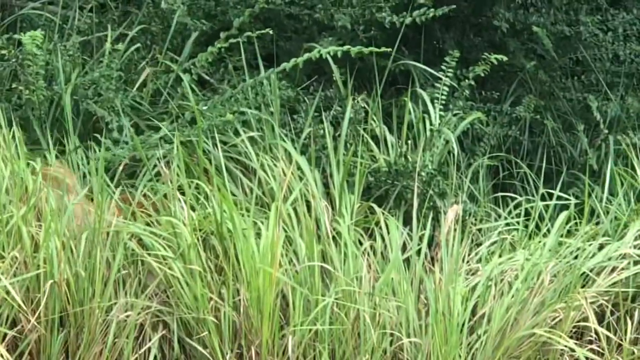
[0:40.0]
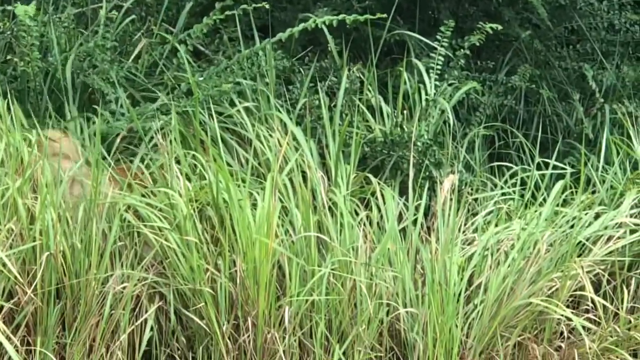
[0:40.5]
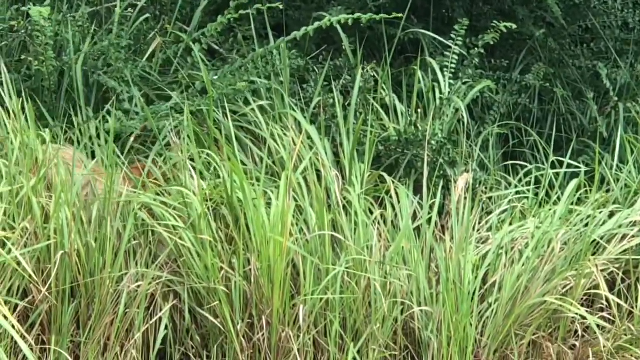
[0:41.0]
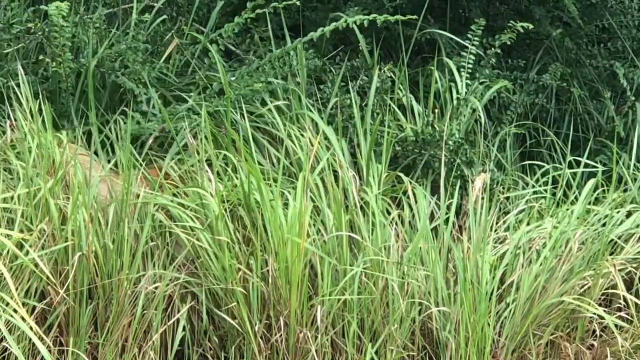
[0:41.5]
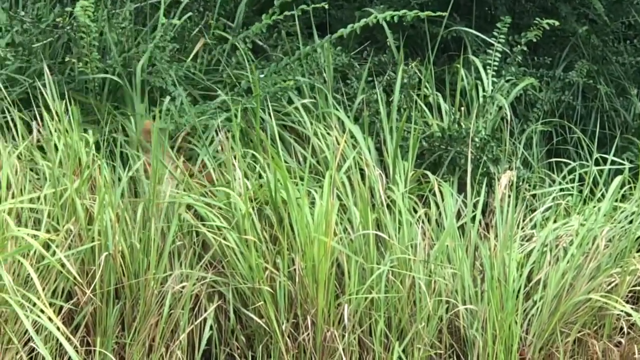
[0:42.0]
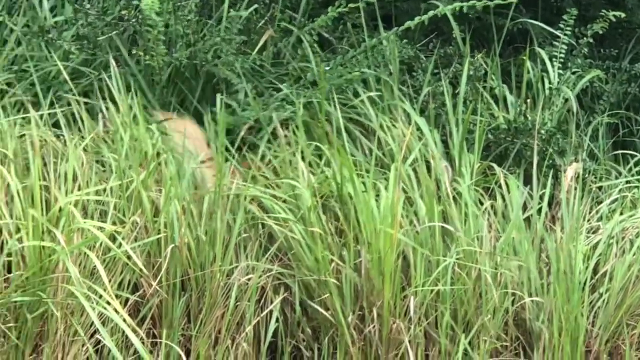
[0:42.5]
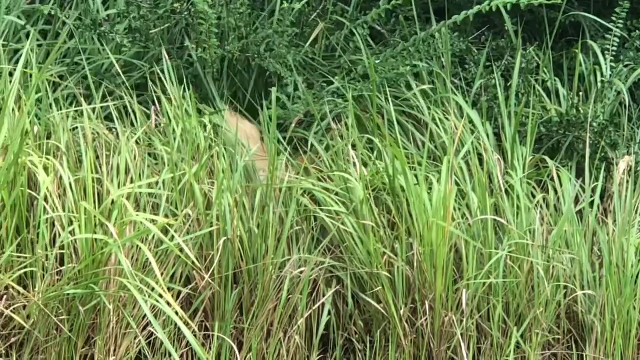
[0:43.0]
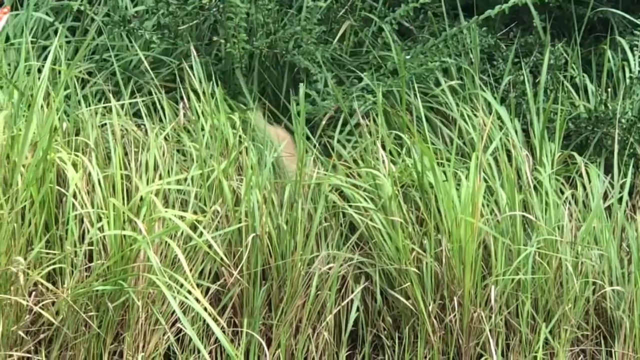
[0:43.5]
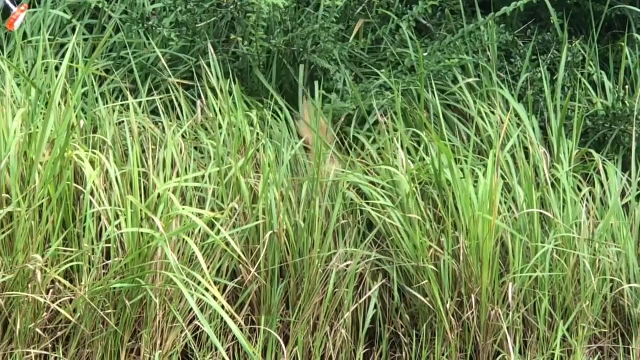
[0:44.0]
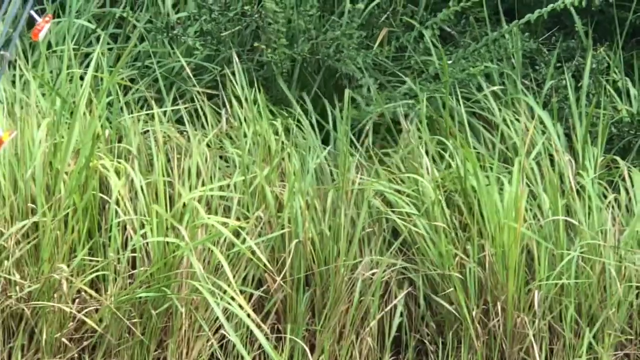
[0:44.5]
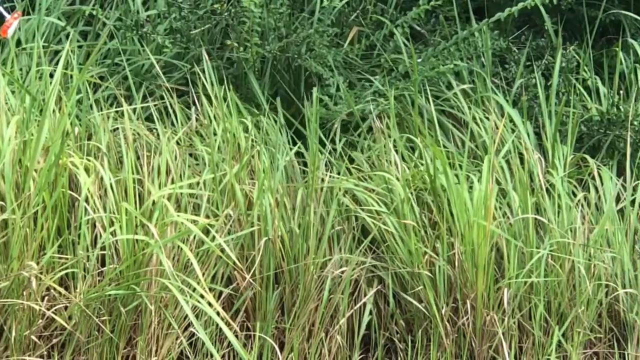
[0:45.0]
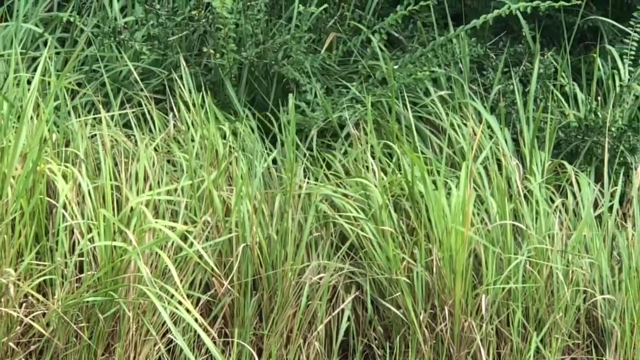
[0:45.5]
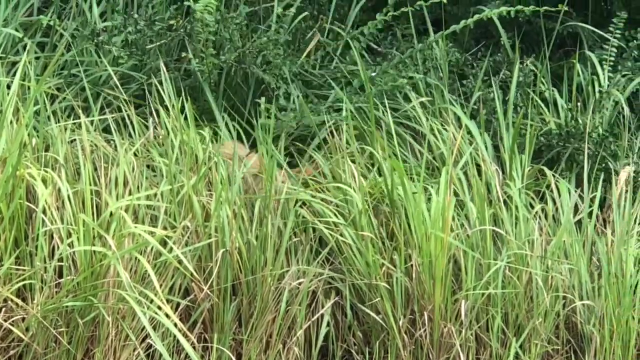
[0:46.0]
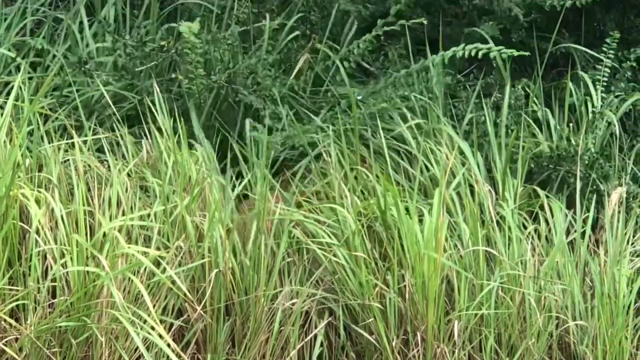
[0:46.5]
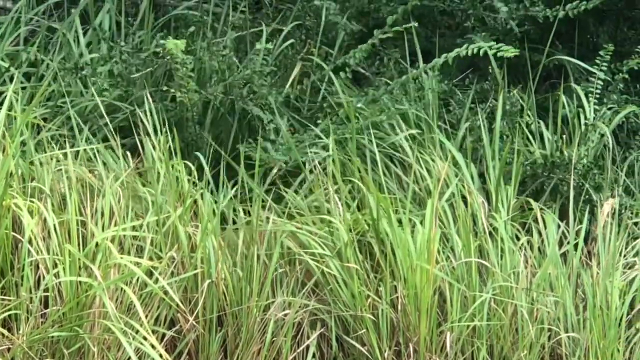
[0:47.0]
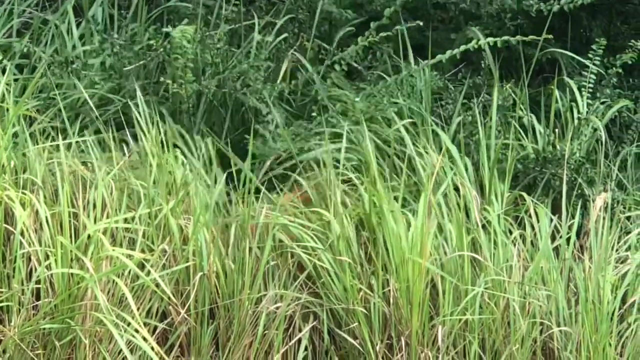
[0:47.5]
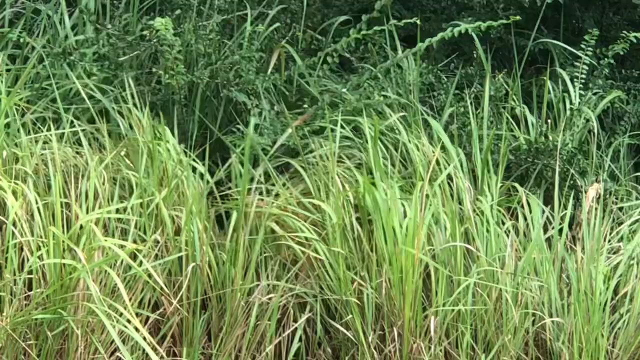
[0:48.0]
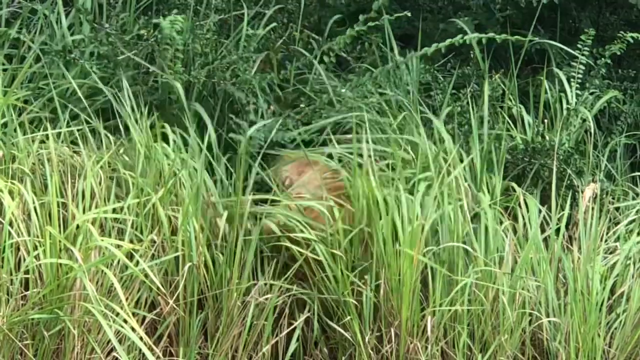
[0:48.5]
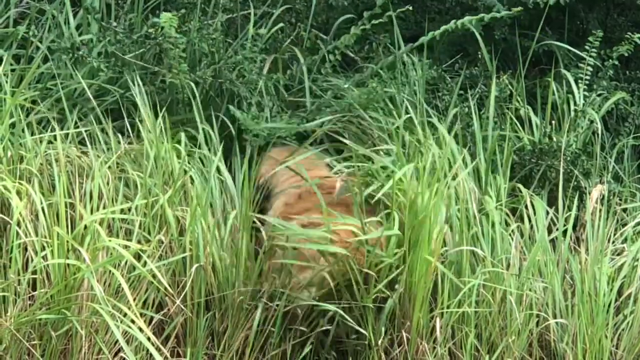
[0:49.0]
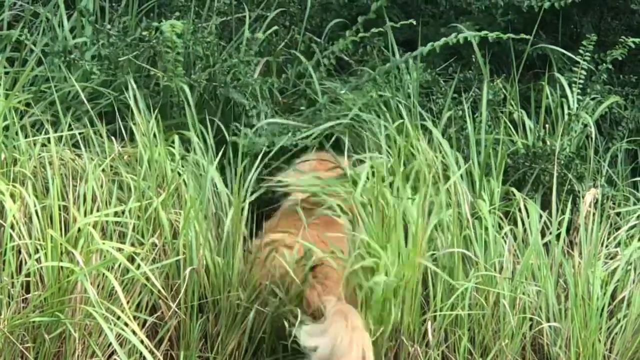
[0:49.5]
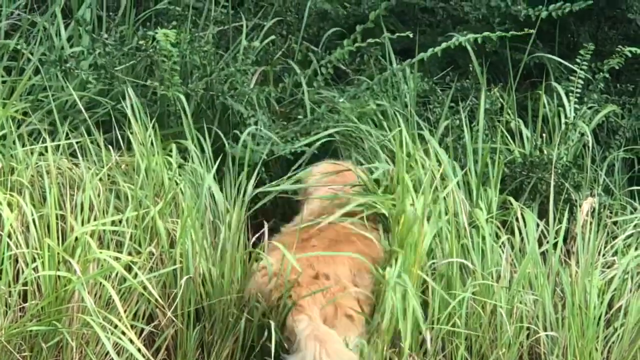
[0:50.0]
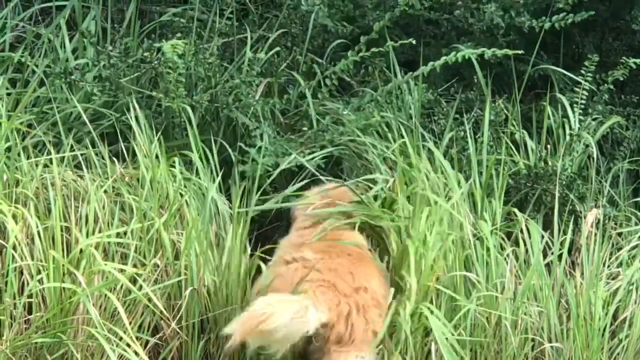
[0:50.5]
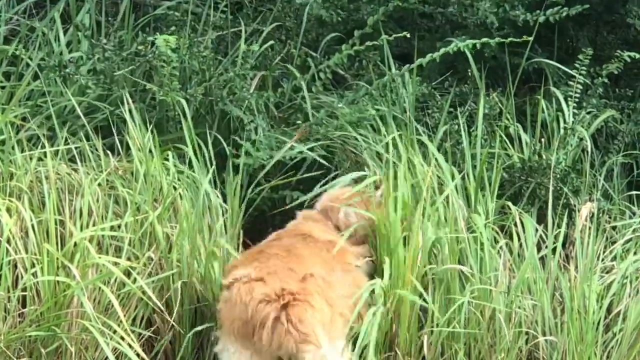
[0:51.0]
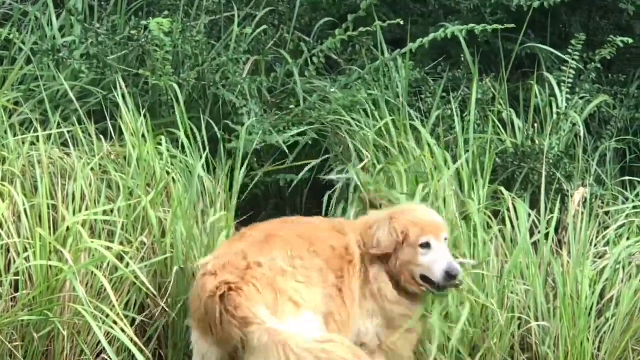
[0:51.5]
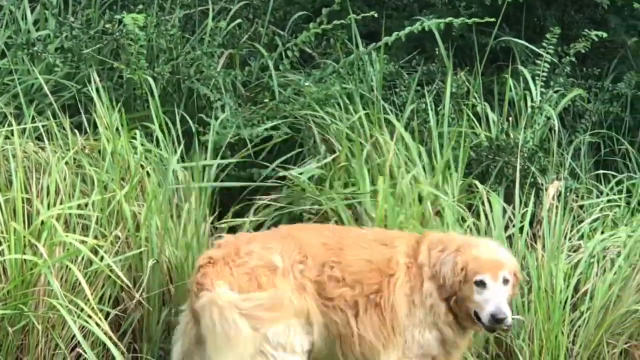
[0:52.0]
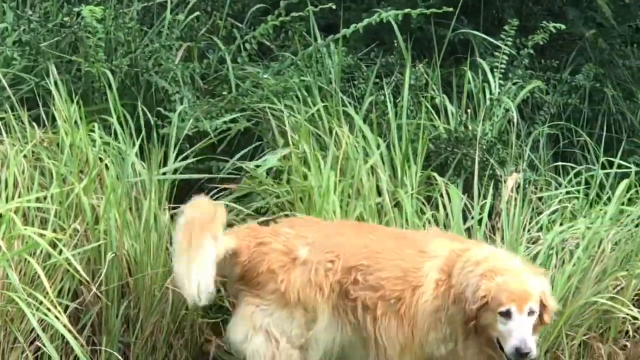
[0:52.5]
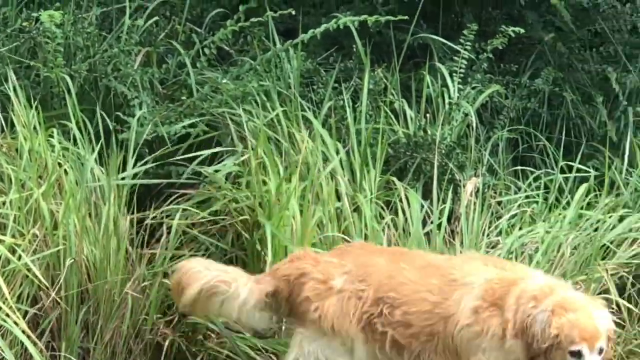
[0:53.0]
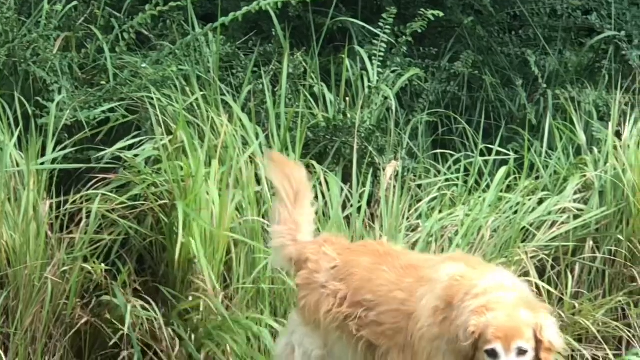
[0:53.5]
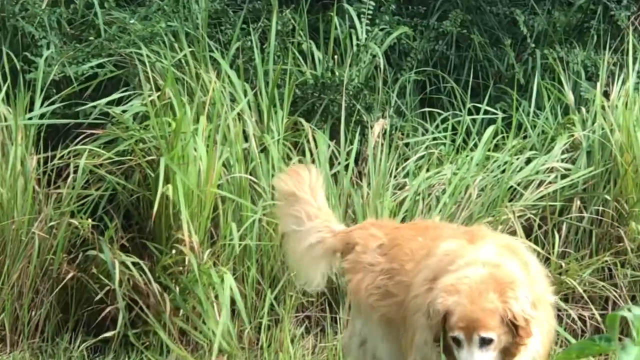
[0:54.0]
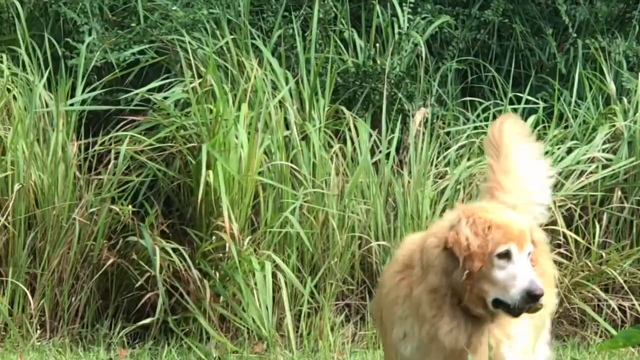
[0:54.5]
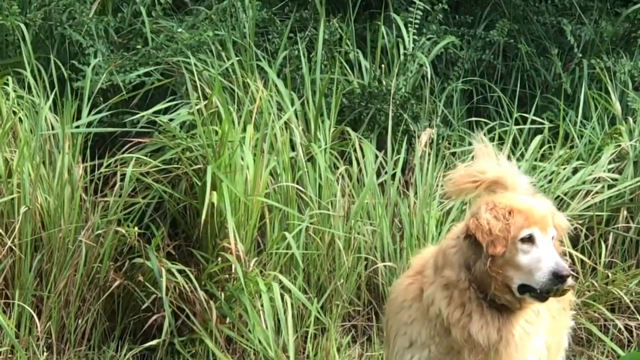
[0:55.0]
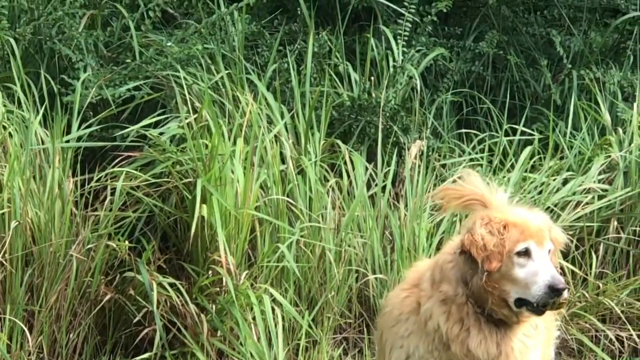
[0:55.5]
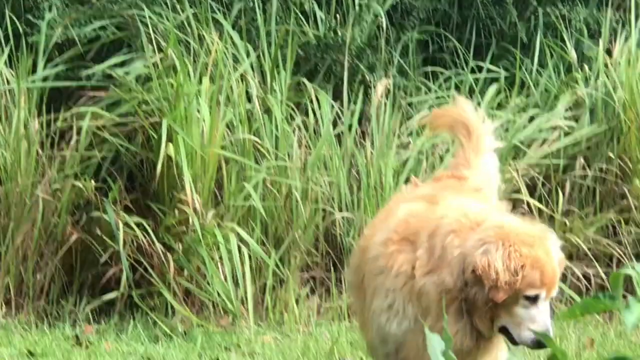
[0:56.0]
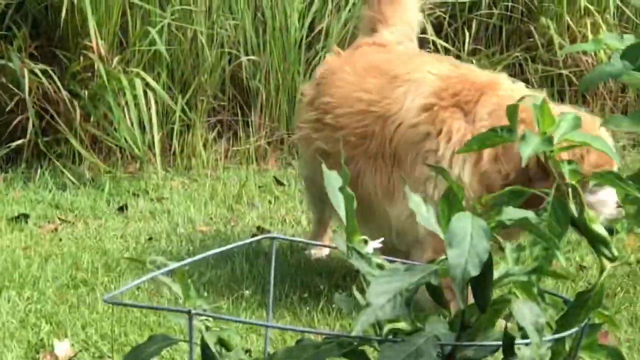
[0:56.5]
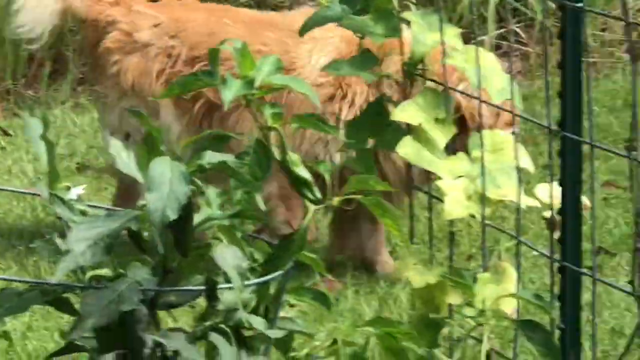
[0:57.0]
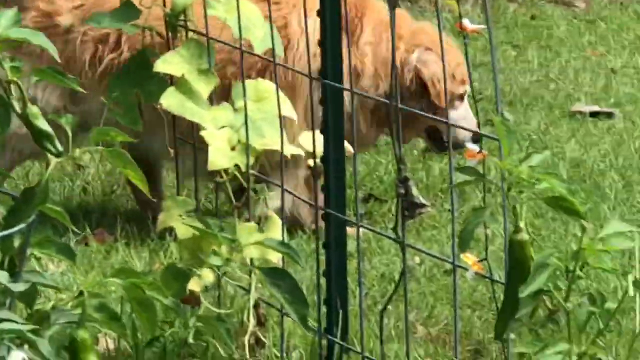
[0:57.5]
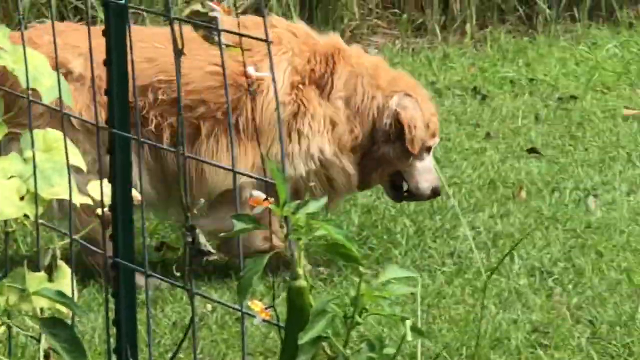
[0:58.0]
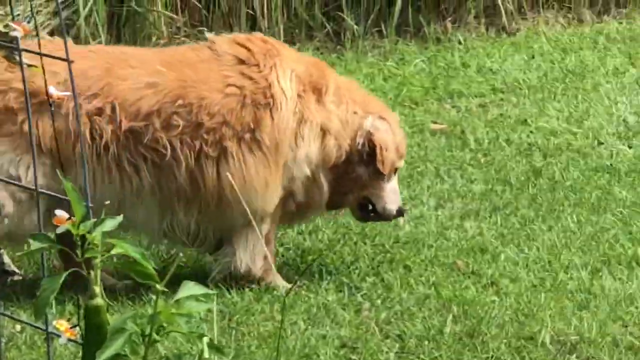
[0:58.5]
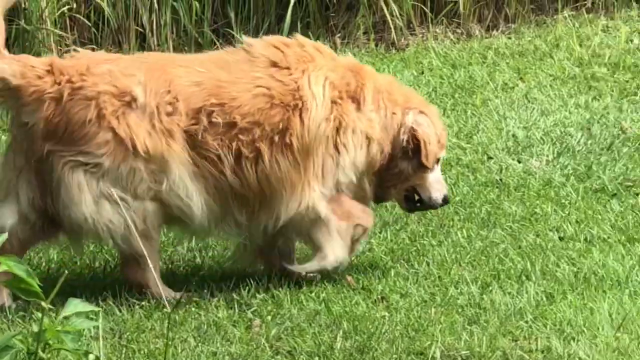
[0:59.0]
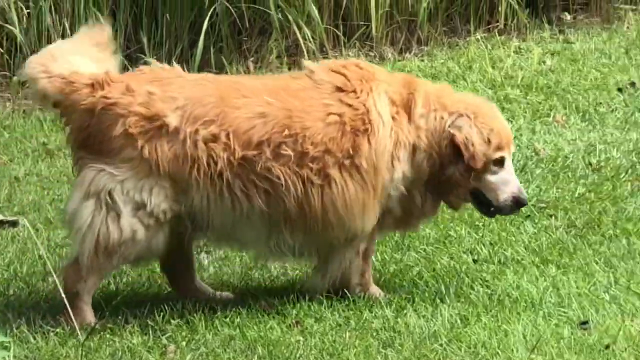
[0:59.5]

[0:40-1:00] The grass keeps moving because of the animal's tail behind it. After a moment, the animal is revealed to be a dog. It looks like a Golden Retriever, but may be another breed with fluffier, longer hair. The dog walks backwards, its tail pointing toward the camera, stepping back out of the grass, which reaches its head. Once out, it turns around and starts walking to the right, raising its head carefully for a second, seemingly as if it heard its name. It passes behind the device with plants growing along its metal wires and continues walking.